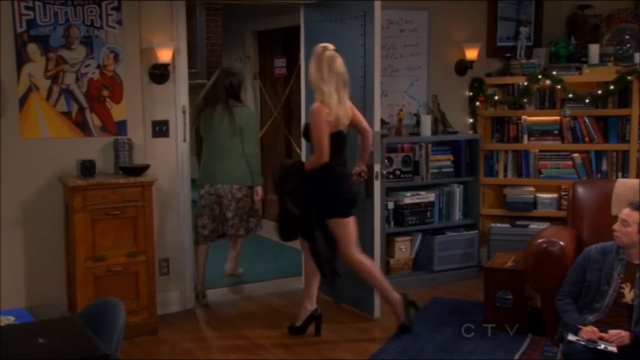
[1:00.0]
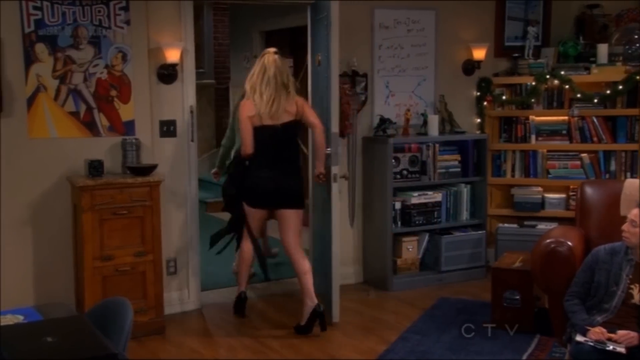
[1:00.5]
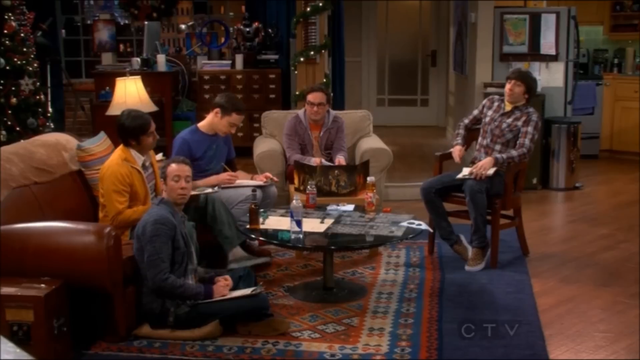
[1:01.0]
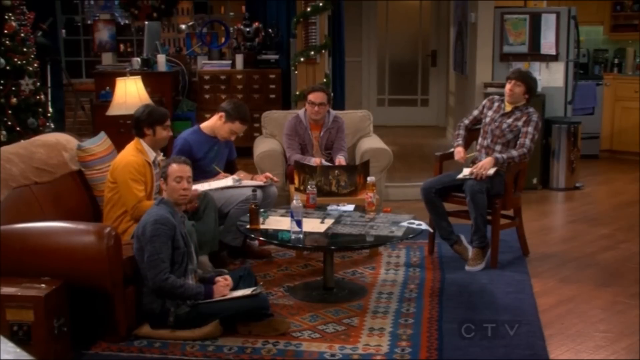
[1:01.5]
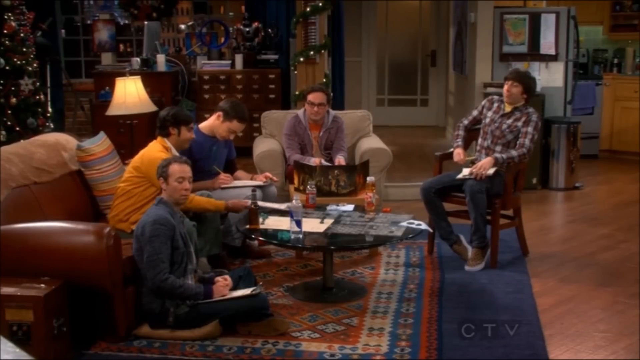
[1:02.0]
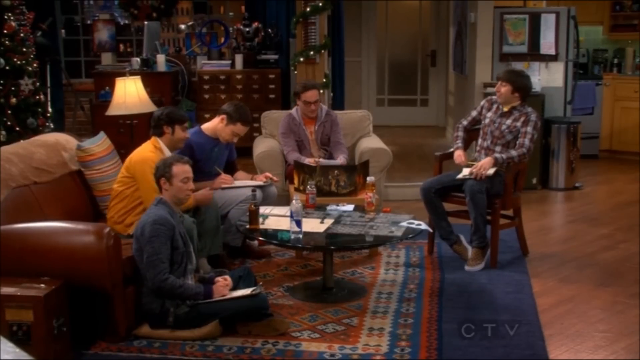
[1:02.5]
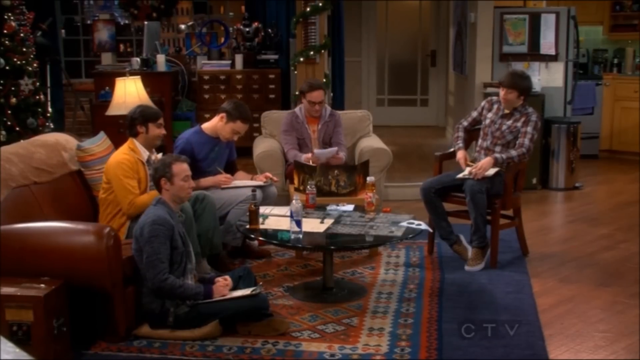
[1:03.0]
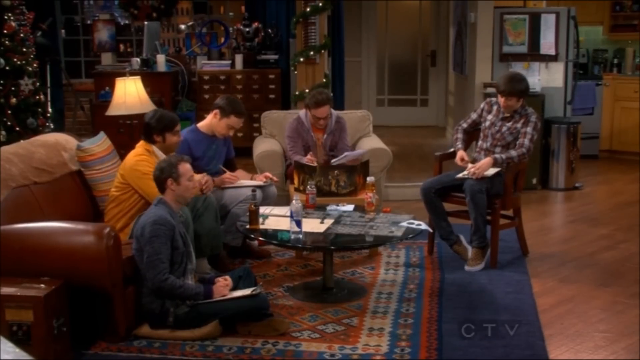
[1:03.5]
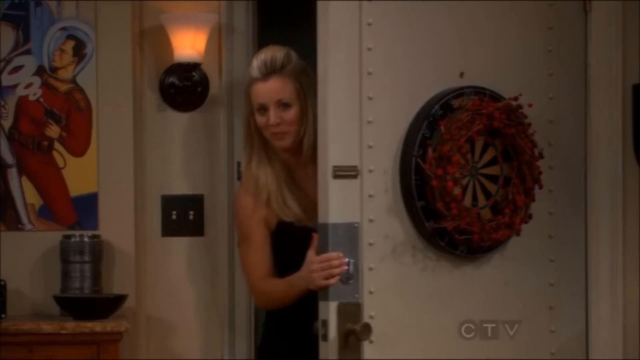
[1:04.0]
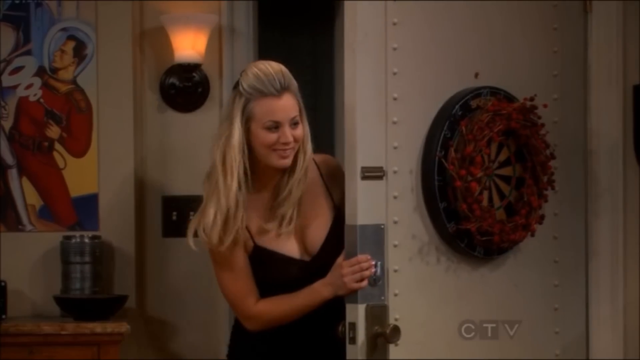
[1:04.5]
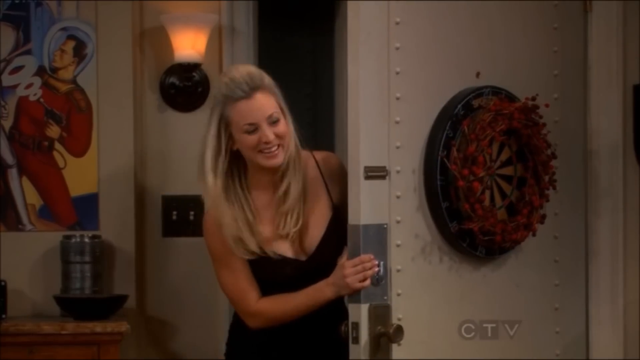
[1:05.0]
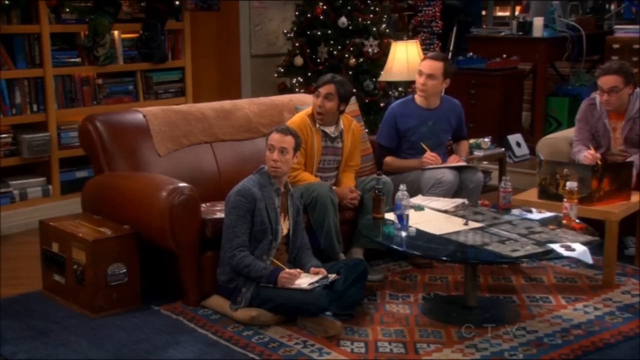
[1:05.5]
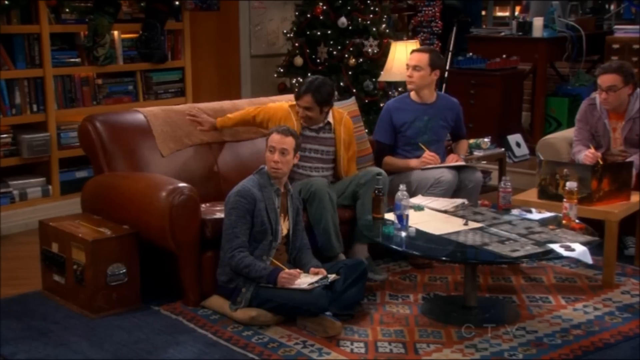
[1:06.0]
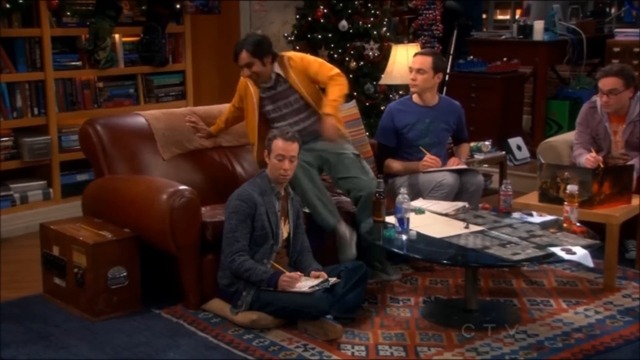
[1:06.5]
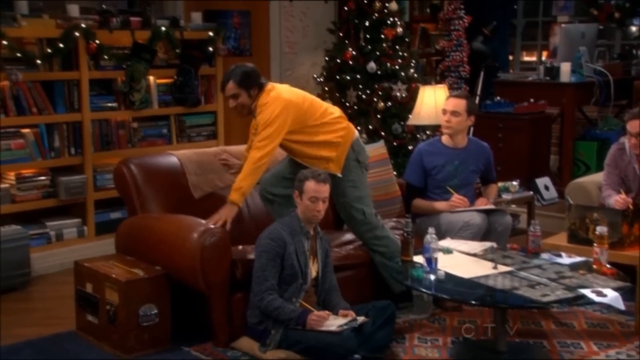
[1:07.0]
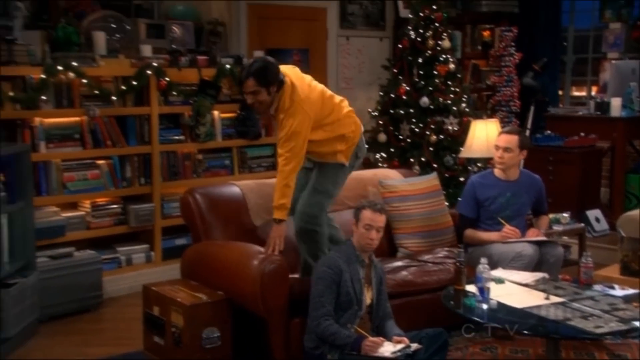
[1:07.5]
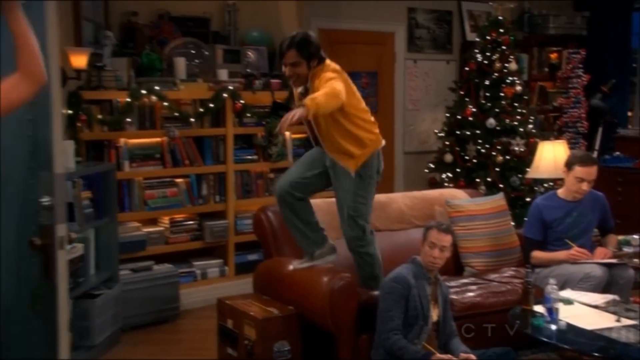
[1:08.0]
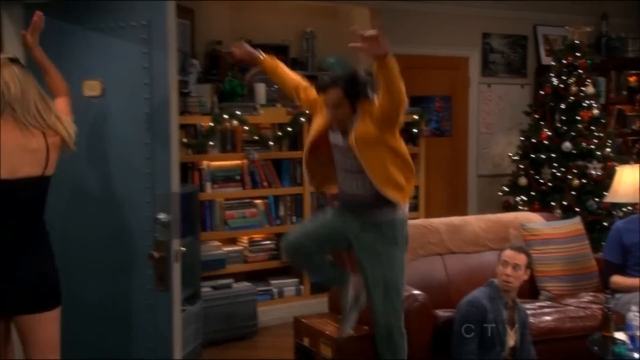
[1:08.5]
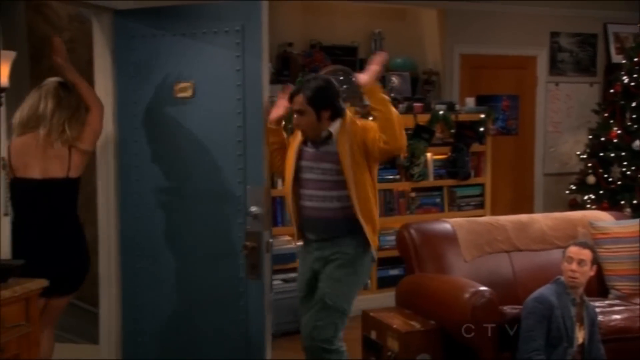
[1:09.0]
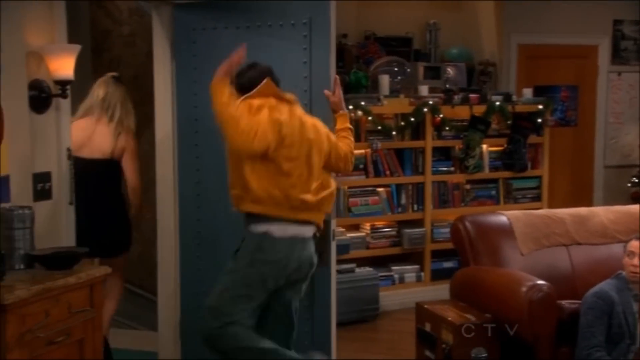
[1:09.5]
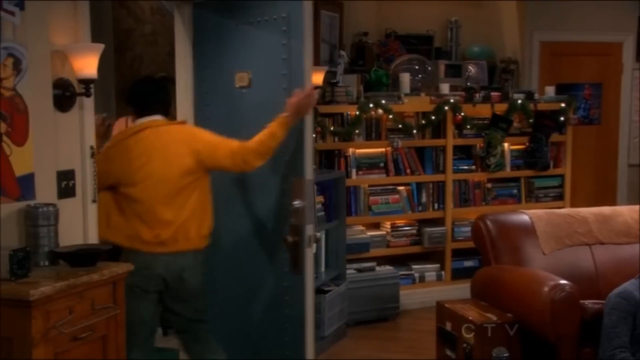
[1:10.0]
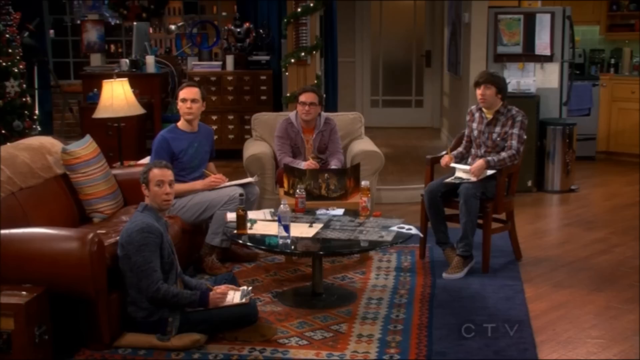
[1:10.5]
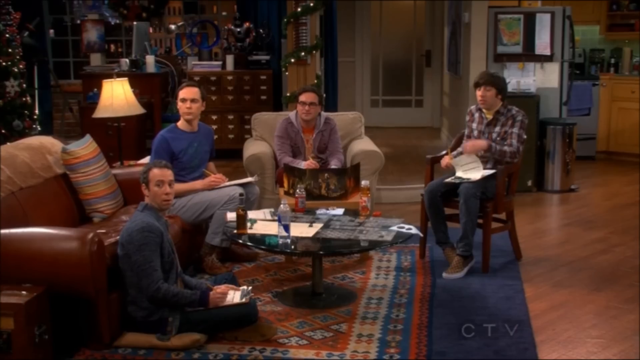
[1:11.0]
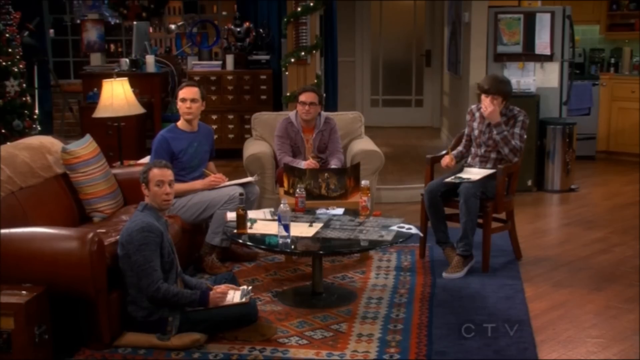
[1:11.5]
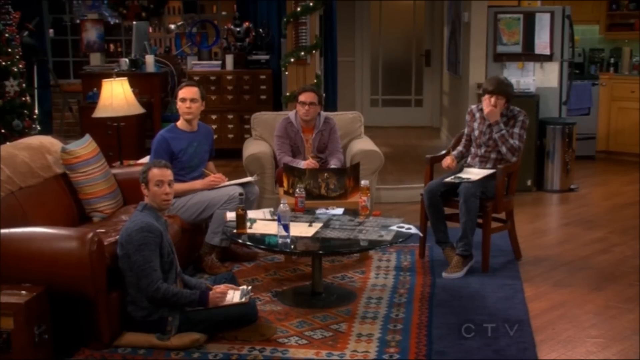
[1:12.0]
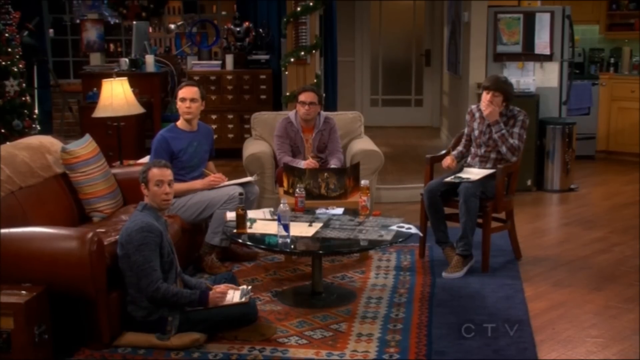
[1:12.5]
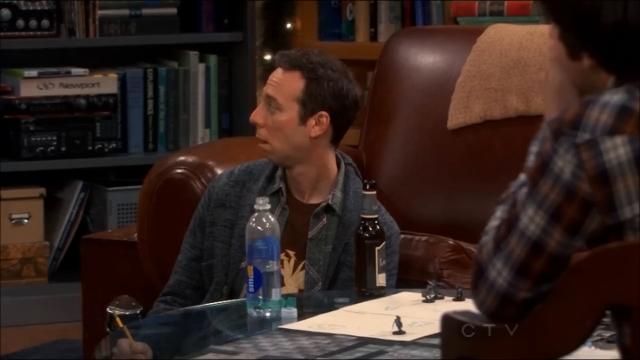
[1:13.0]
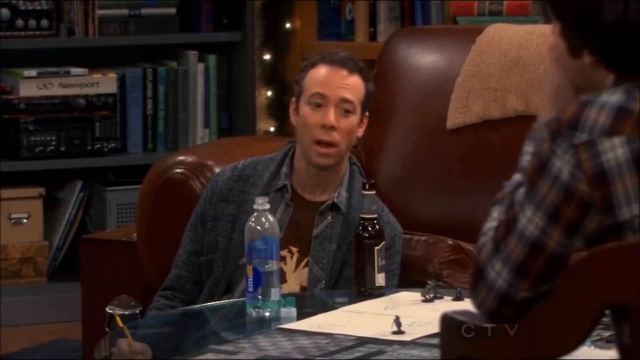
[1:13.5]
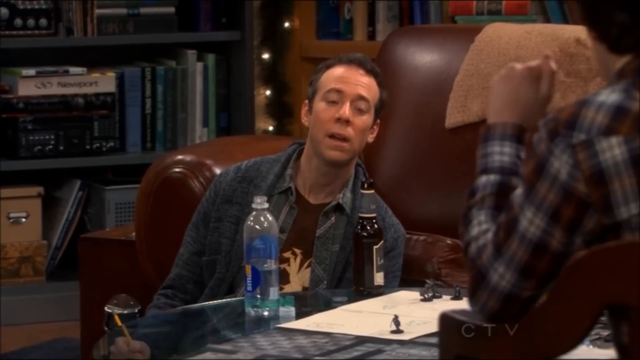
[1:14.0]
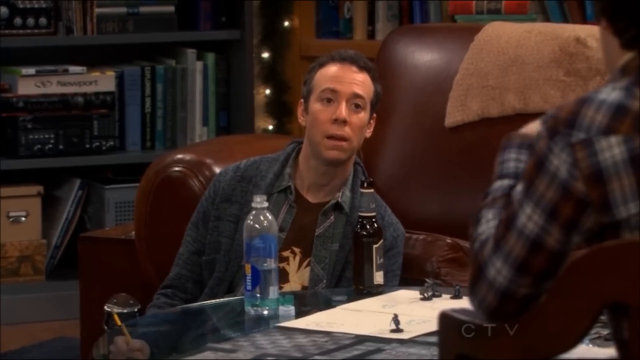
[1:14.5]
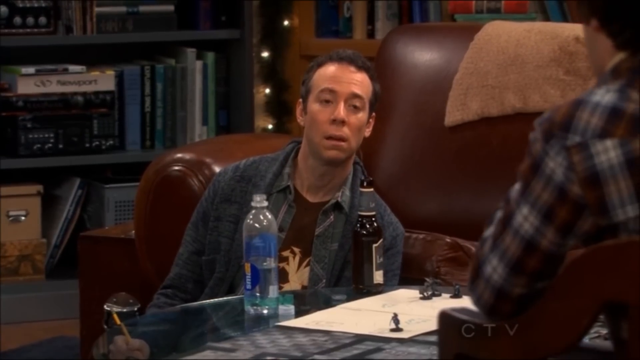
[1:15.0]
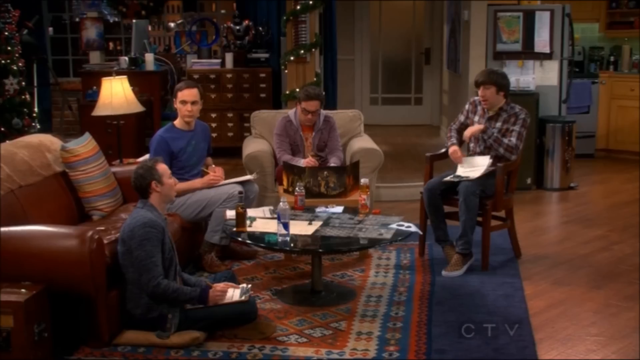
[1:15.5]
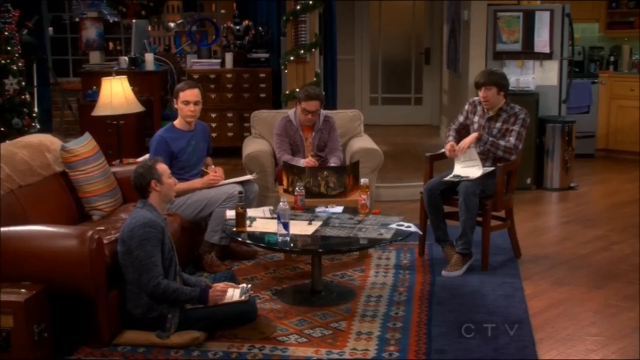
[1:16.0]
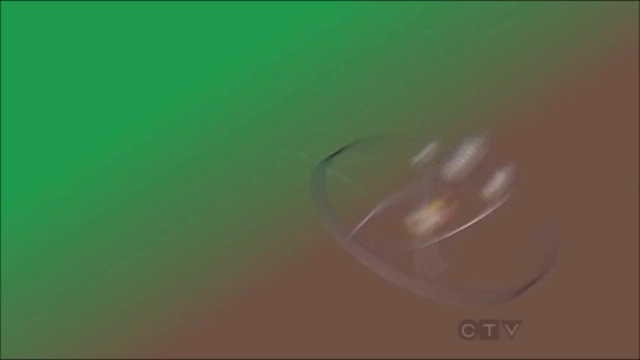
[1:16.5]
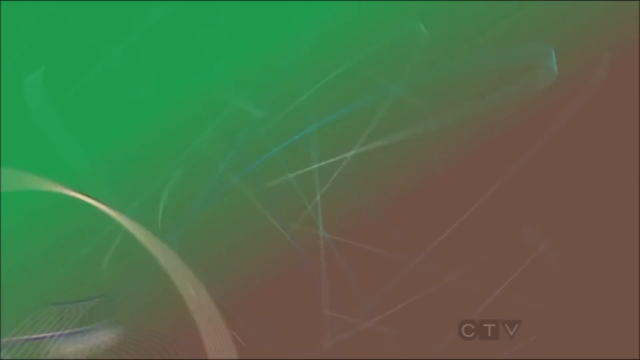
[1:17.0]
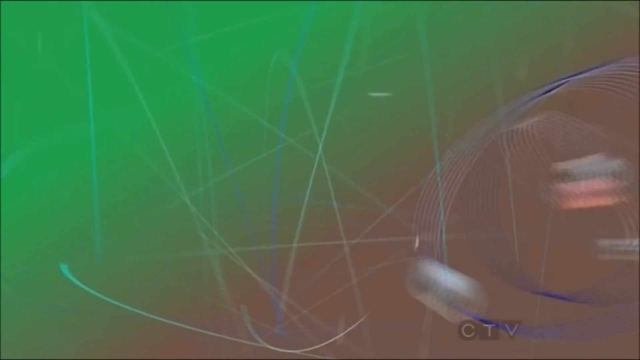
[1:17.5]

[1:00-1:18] Three women leave a room: one in a short red dress, one in a green cardigan with a floral dress, and one in a short black strappy dress with long blonde hair. The camera pans to five men sitting around a table, apparently playing a game of Dungeons and Dragons. The man on the right wears a chequered shirt and sits on a wooden chair, with a kitchen in the background on the right. There is a white doorway with a glass door. To the left of the door sits a man in a purple jacket and hoodie, looking at a book. To his left is a man in a blue top with a long-sleeved shirt underneath, writing something on a clipboard. To his left is a man with dark hair in an orange jacket, sitting on a brown leather sofa, and on the floor is a man in a long-sleeved blue coat. The door opens to reveal the blonde woman in the black dress peering through it, her right hand on the side of the door. She nods her head to the right. The man in the middle of the couch jumps up excitedly, steps on the arm of the couch and jumps down. He leaves the room making excited gestures, pumping his left arm upwards as well as his right, and closes the door with his right hand. The camera pans back to four men now sitting looking at the door. The man in the check shirt raises his left hand to his face and strokes his chin. The man on the floor turns to the man in the checkered shirt and says something.